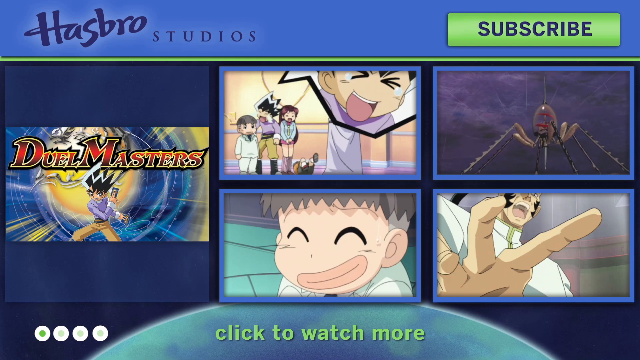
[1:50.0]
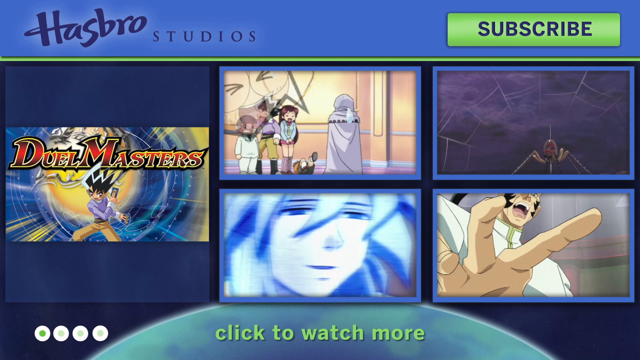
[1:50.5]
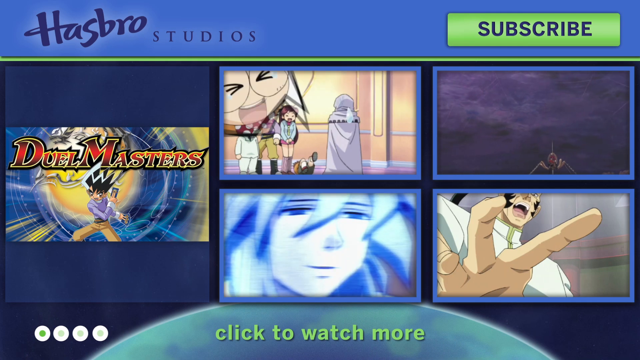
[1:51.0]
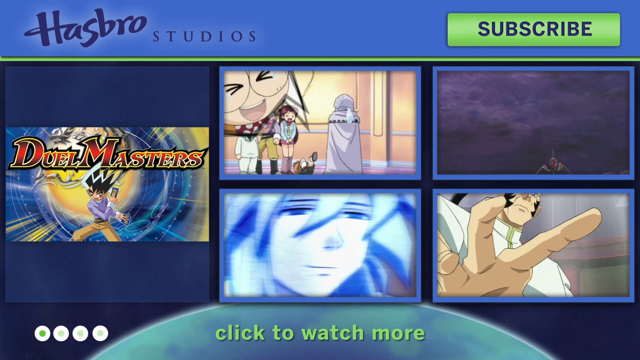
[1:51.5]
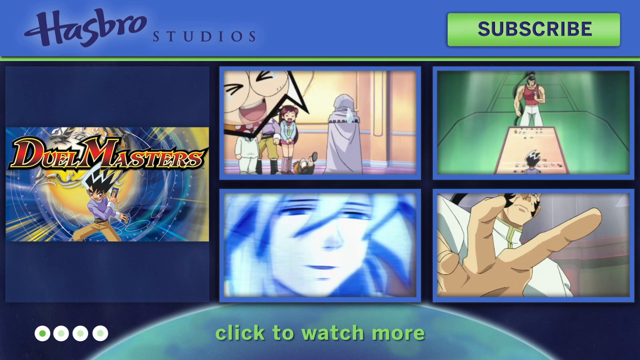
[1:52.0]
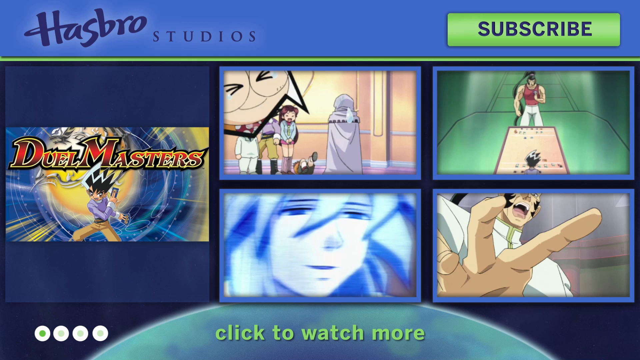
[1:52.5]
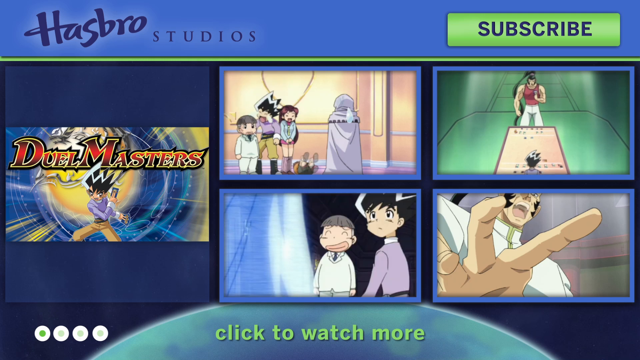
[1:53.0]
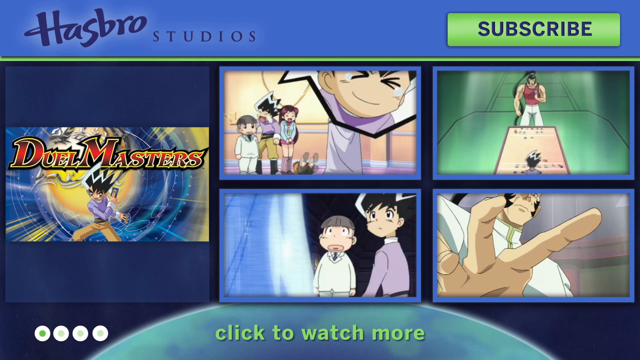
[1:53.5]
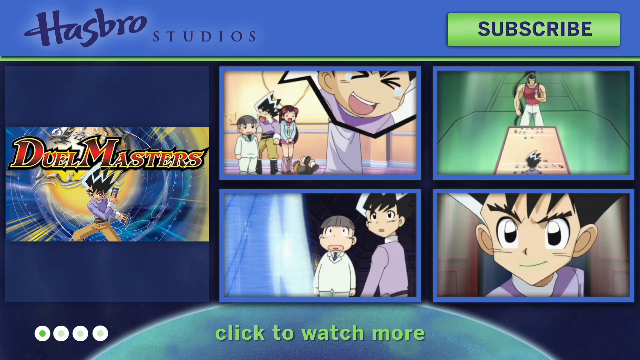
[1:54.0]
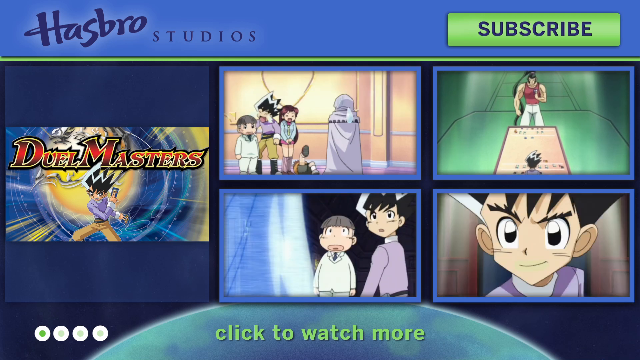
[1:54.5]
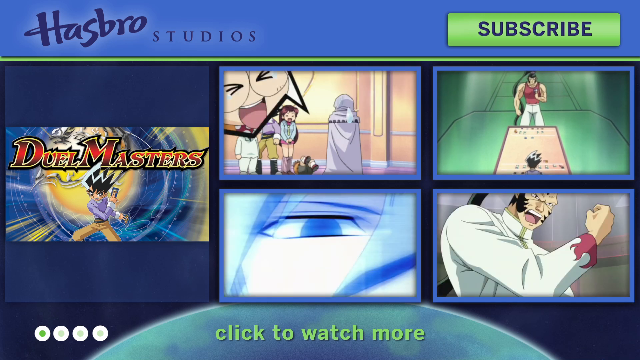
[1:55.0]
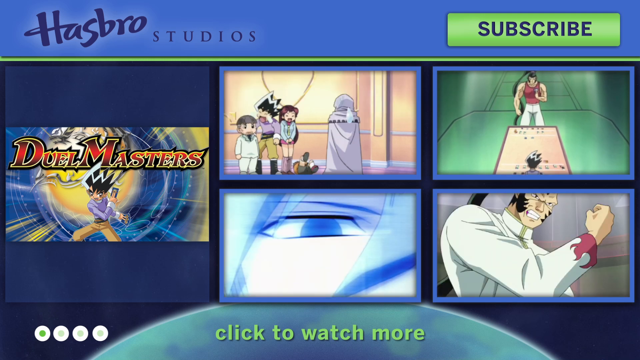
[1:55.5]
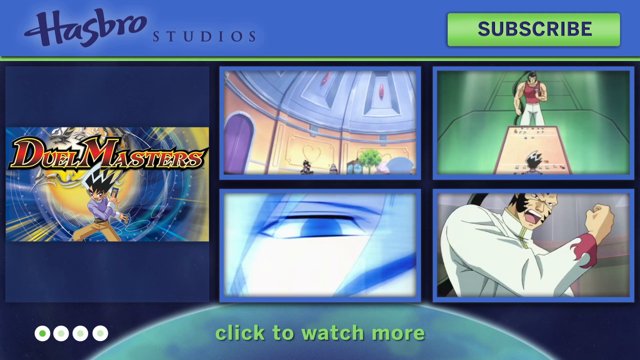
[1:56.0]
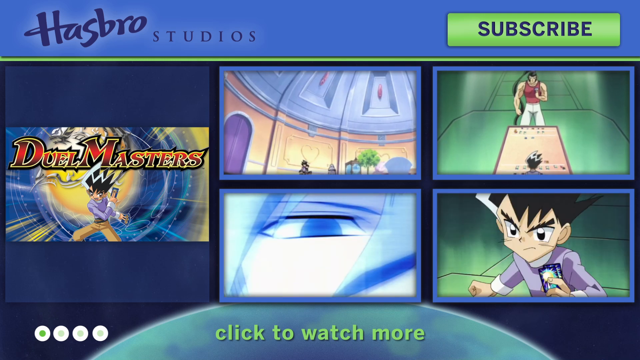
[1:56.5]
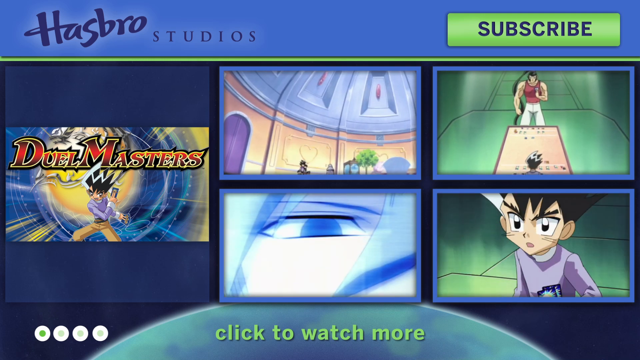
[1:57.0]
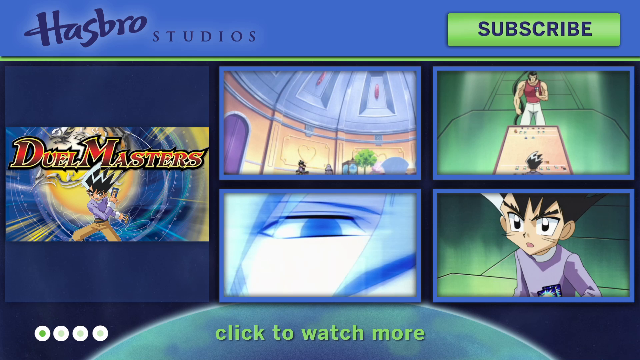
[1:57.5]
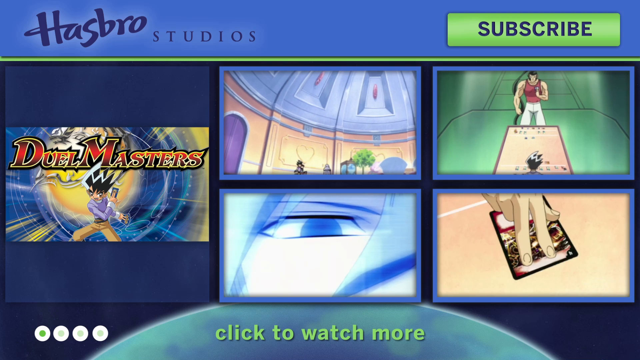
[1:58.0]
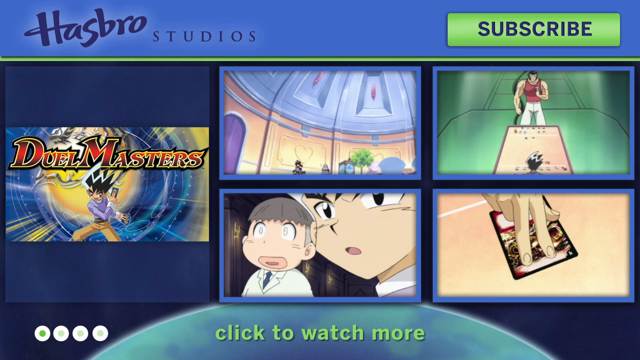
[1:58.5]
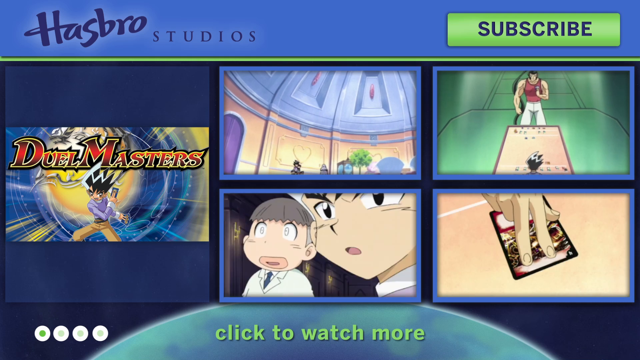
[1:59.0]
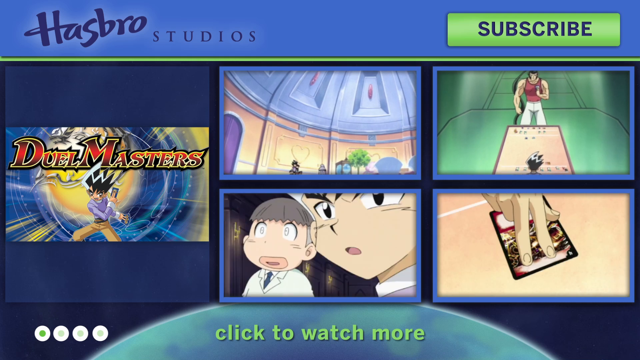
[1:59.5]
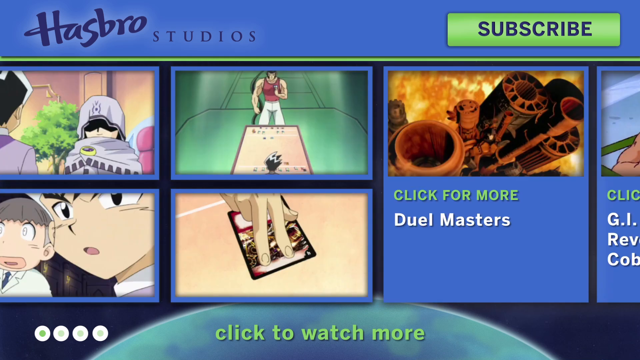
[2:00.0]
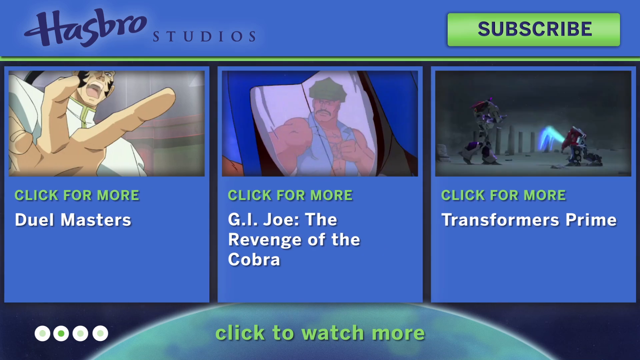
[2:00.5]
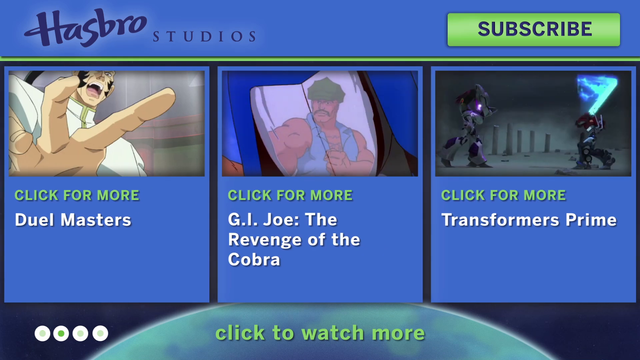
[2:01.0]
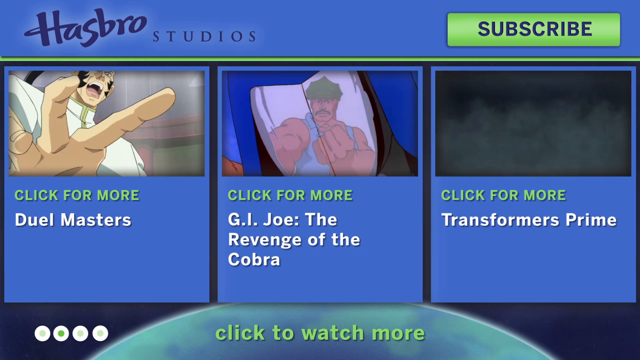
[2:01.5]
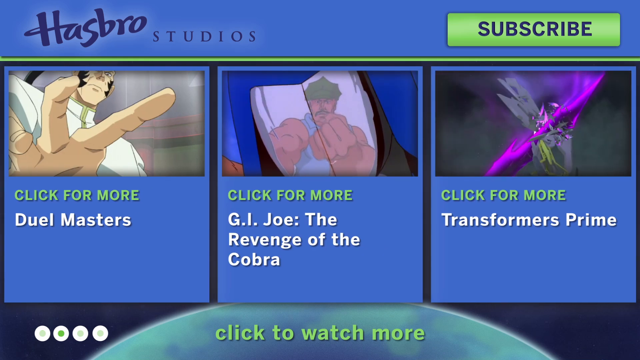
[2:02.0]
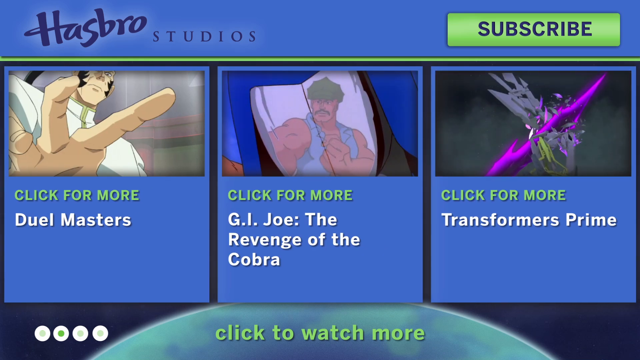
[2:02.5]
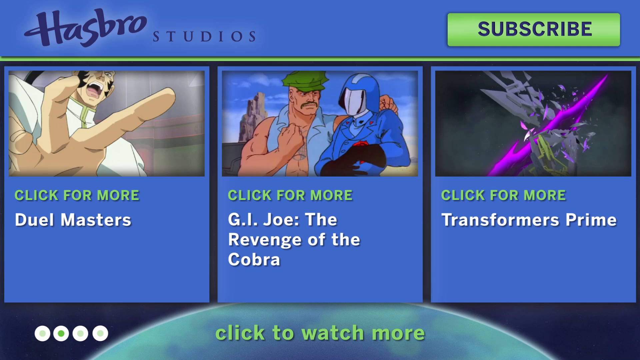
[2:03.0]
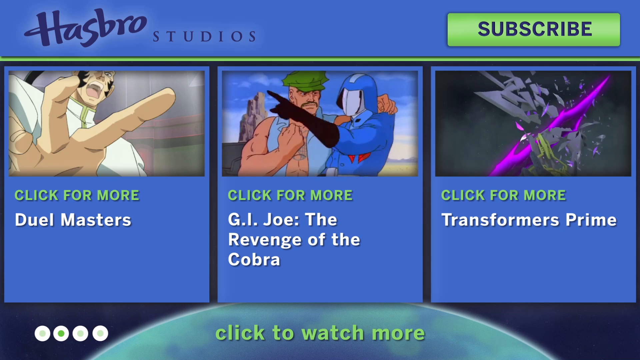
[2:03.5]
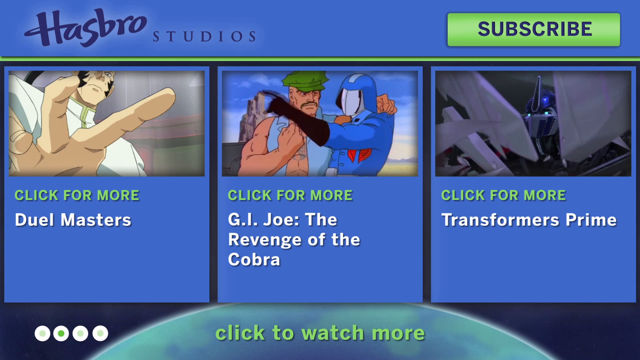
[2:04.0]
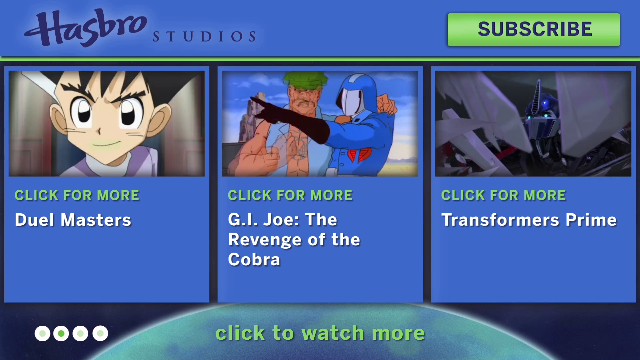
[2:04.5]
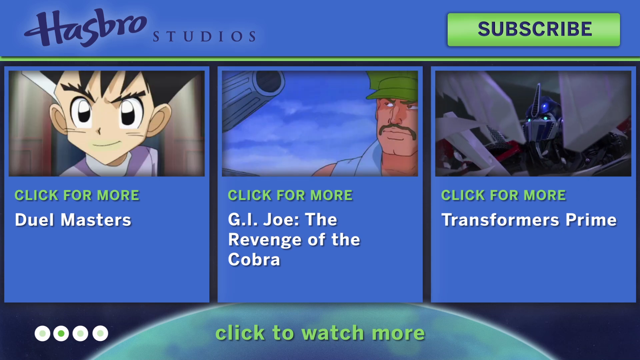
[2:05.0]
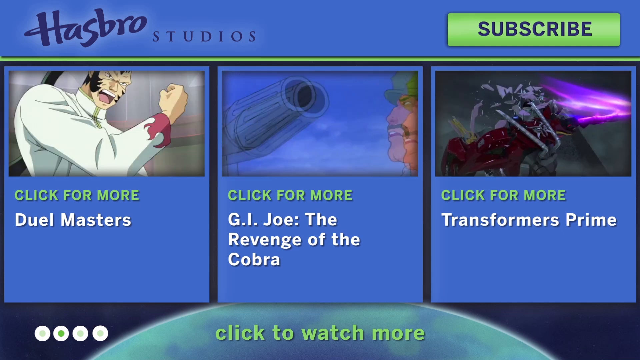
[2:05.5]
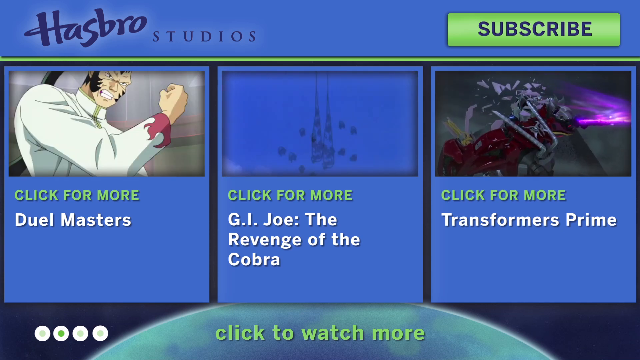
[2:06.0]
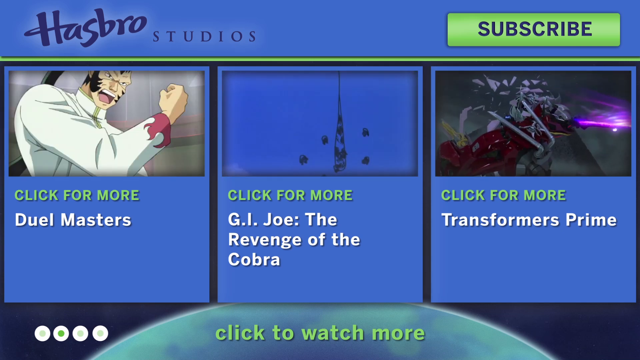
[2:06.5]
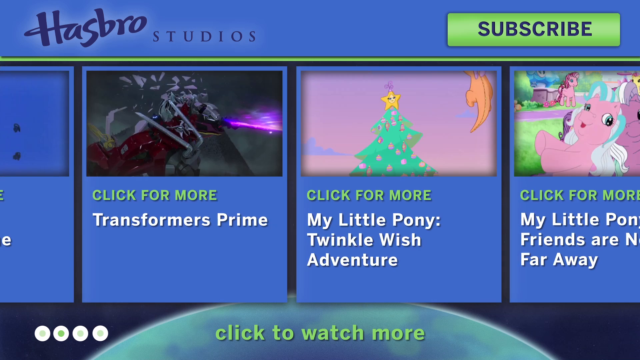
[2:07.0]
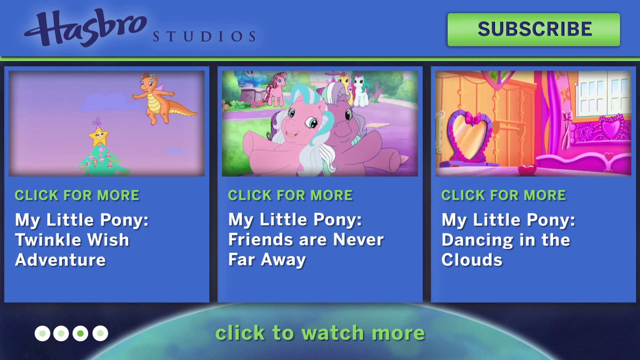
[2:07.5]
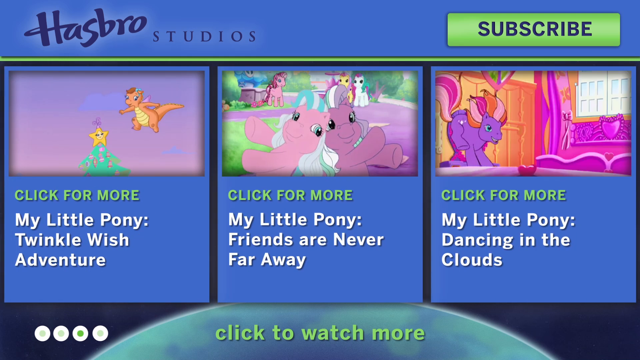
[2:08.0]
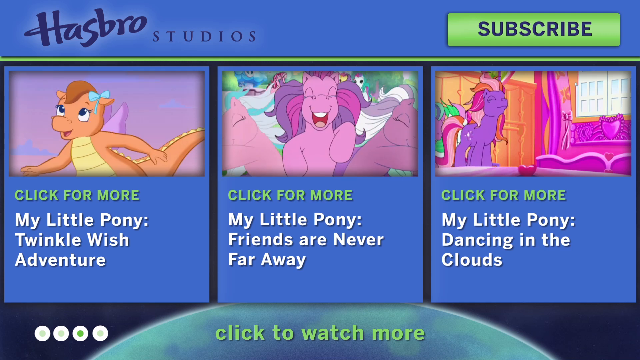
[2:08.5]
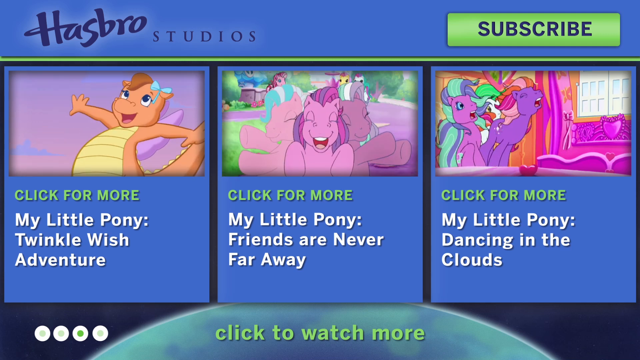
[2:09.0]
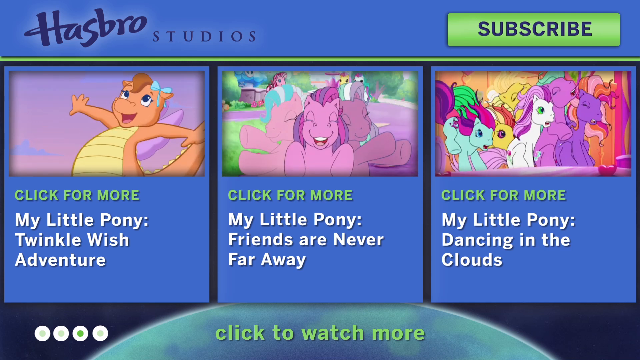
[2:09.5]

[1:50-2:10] The screen shows "subscribe" and "Dune Masters" with frames from the show. In one frame, a young man wears brown khaki trousers and a purple sweater whose sleeves are white at the edges near the hands; his hair is black but dyed white at the edges, a fireball is behind him, and he holds a card. Another frame shows three figures in a house: the same person from the first frame and two kids; one seems to be yelling or crying. Another frame shows a young man and a kid whose eyes are closed but who is smiling. Another shows a spider. Another shows an antelope with a ponytail, a beard and a white shirt. In the frame where the spider was, two opponents face each other with a table in the middle and cards, with light illuminating the table and the people; the floor is green, and they are playing the game.